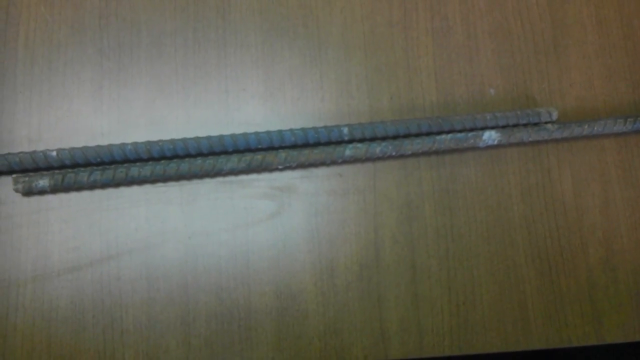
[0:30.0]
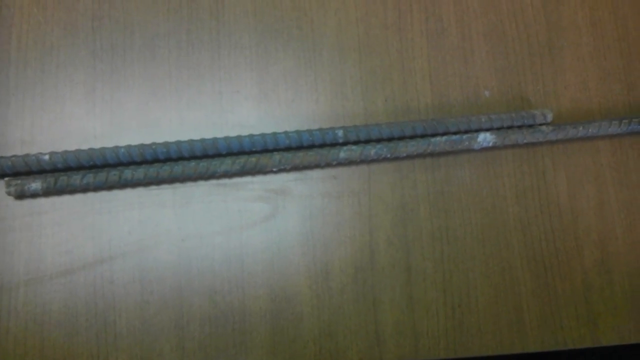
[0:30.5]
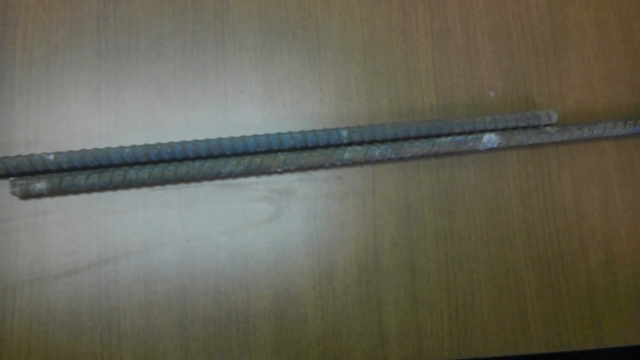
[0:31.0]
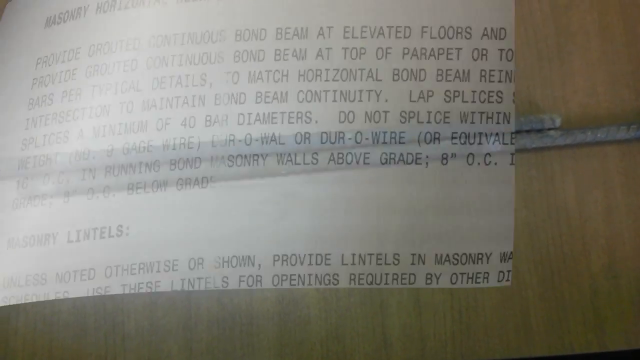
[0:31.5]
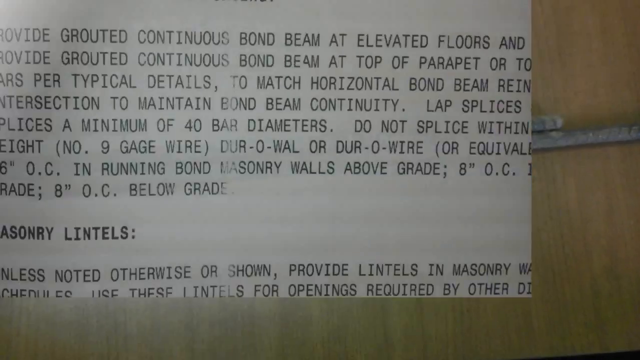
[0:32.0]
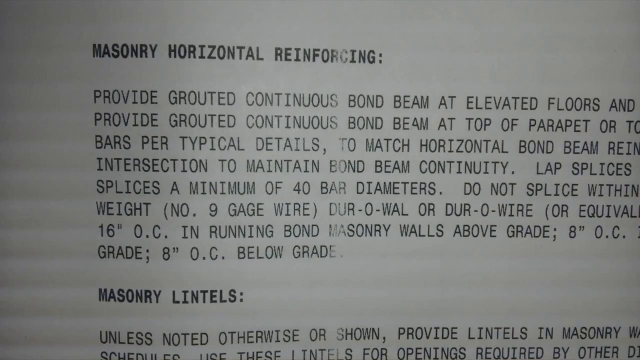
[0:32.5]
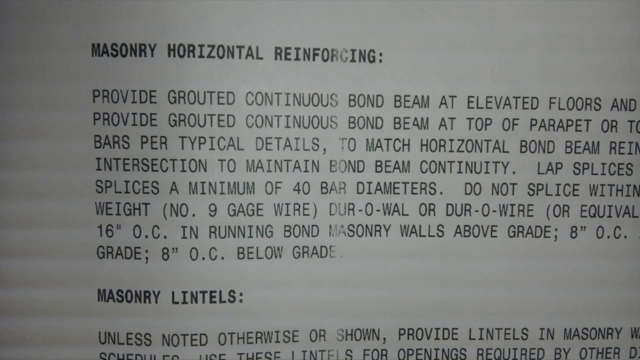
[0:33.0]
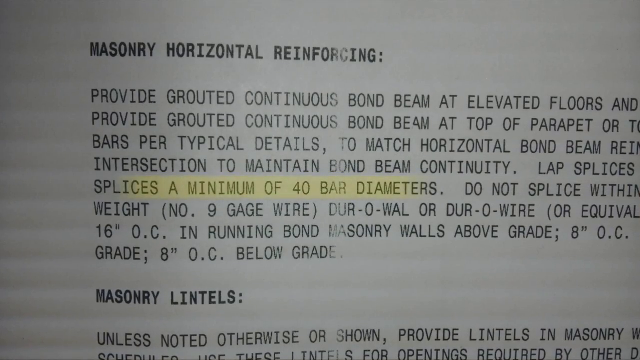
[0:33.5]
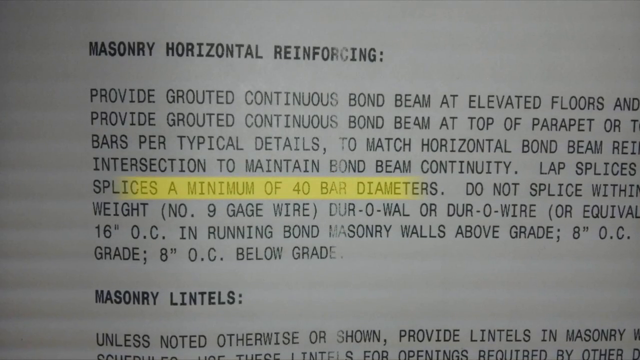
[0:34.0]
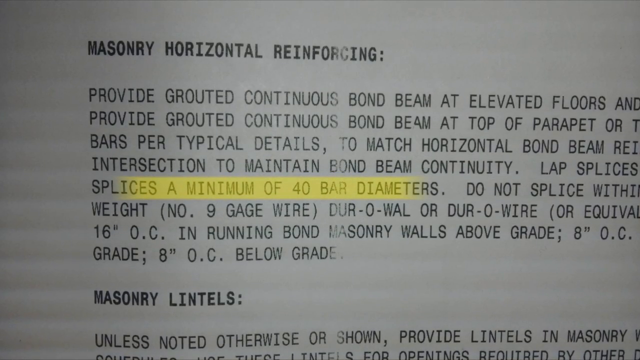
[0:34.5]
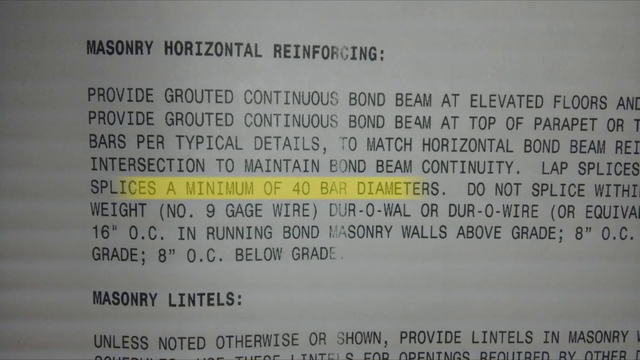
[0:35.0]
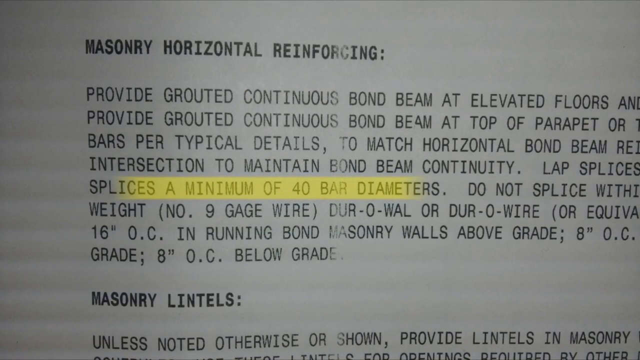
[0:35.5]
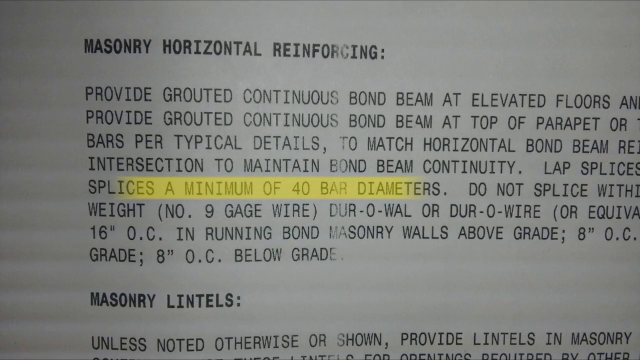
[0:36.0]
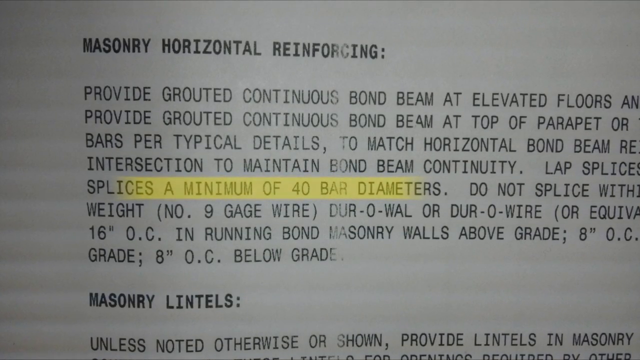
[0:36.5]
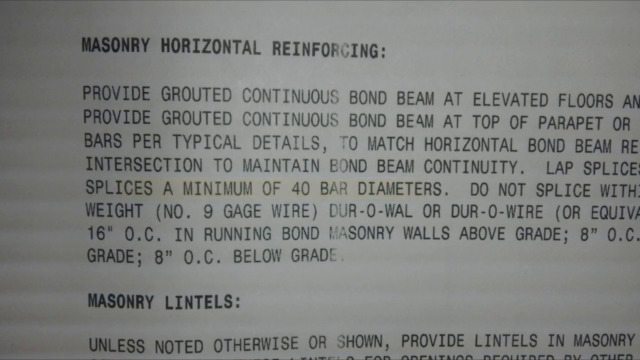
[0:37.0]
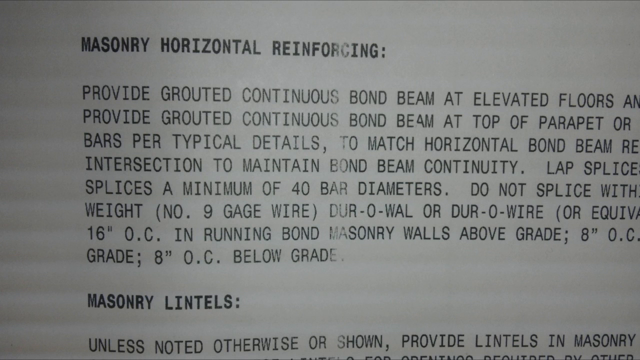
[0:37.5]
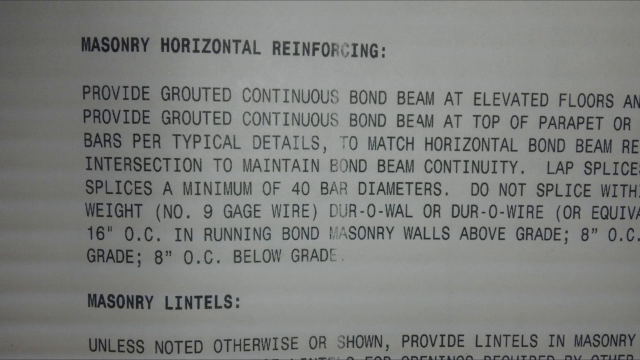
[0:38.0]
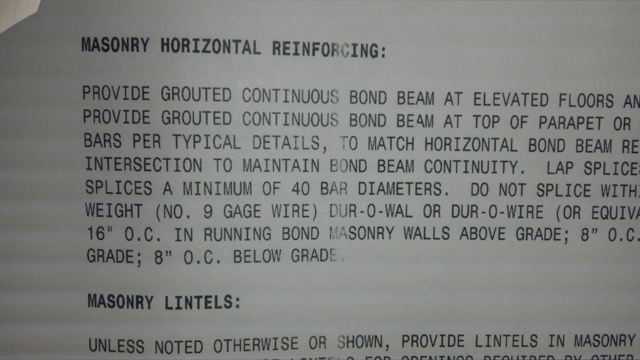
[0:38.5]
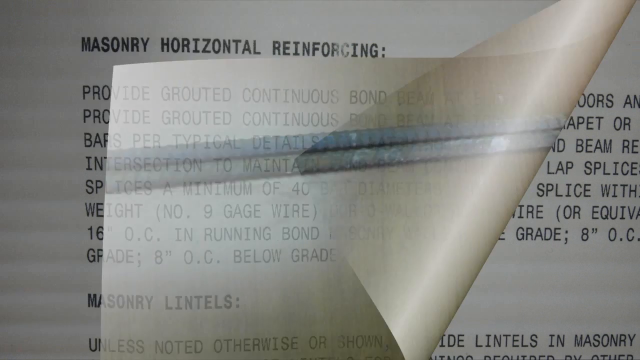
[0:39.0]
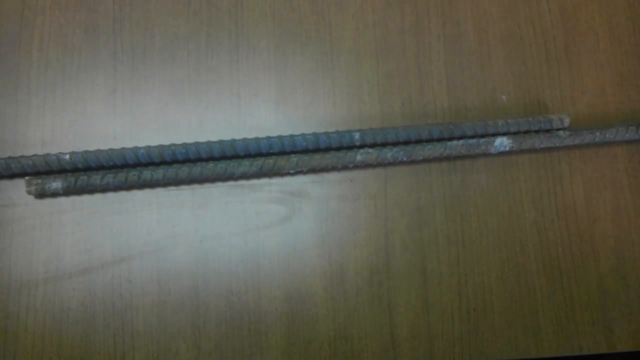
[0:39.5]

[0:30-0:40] Two pieces of rebar, one coming from the left side of the screen and one from the right, lie right next to one another on a wooden table with a visible wood-grain finish and a glare from a light above. The bars have construction debris on them, and the camera shakes a little. A transition, sort of a turning-page effect, leads to a screen with a lot of text under the main heading "masonry horizontal reinforcing." In the paragraph of text, a passage highlighted in yellow reads "splices a minimum of 40 bar diameters." The camera slowly zooms in with a Ken Burns effect, and then another transition follows.